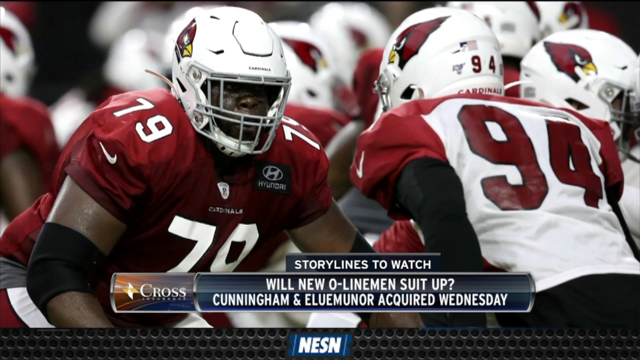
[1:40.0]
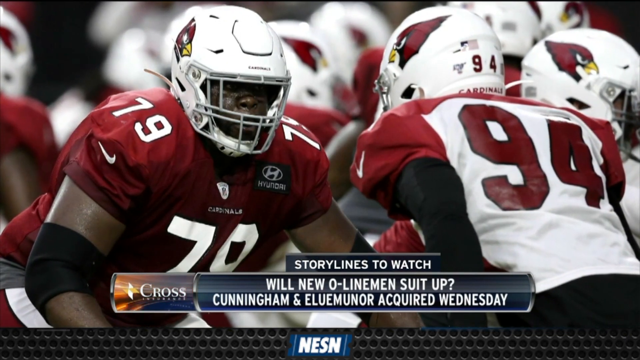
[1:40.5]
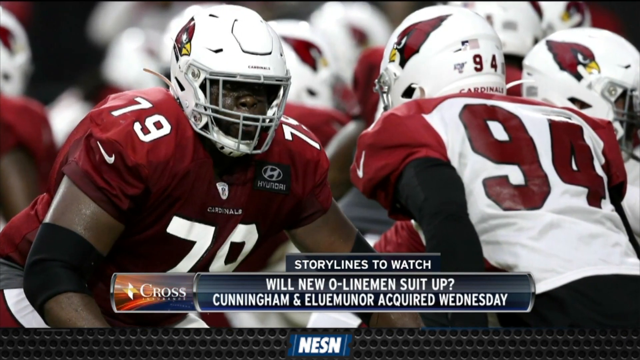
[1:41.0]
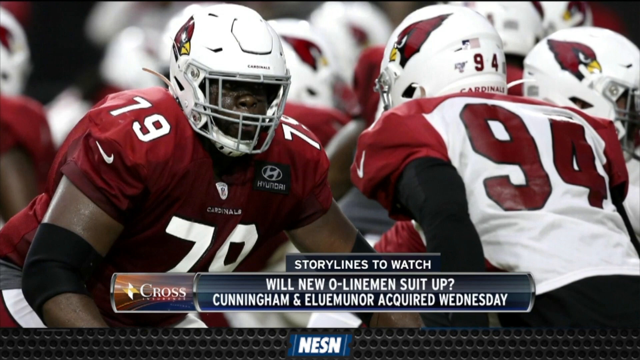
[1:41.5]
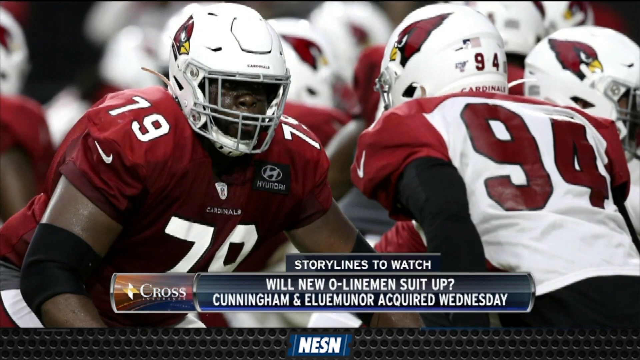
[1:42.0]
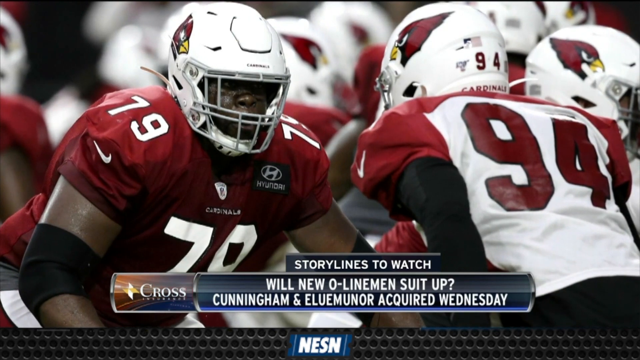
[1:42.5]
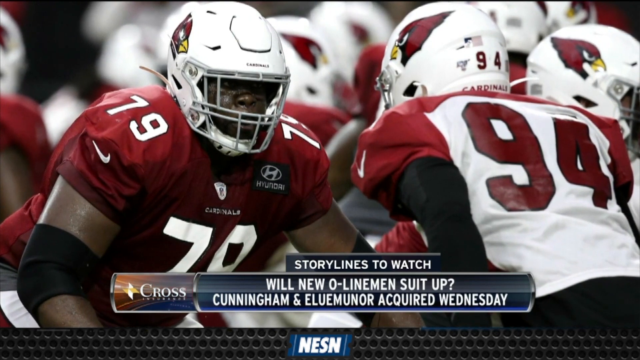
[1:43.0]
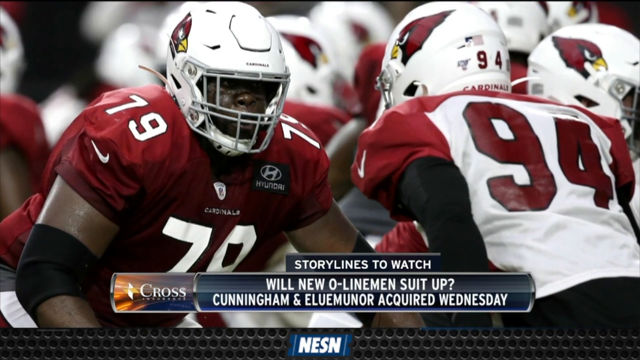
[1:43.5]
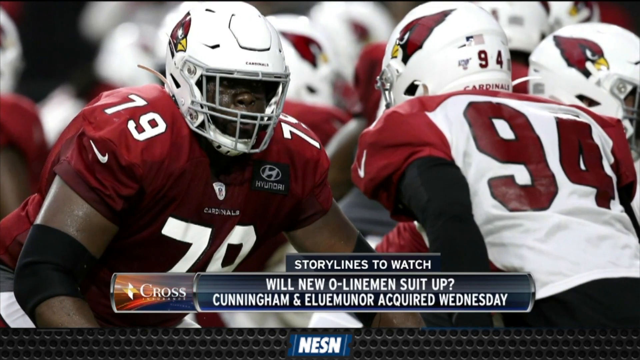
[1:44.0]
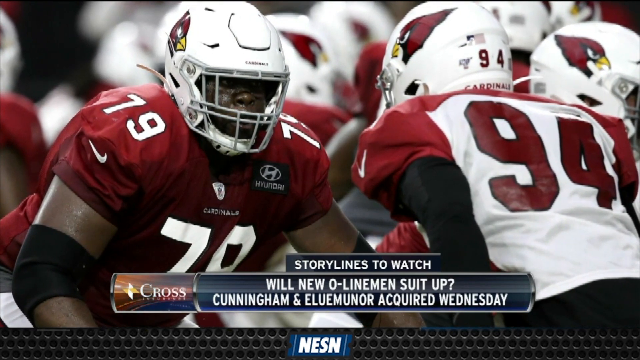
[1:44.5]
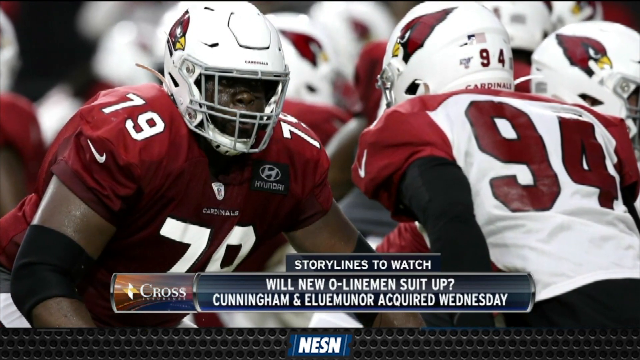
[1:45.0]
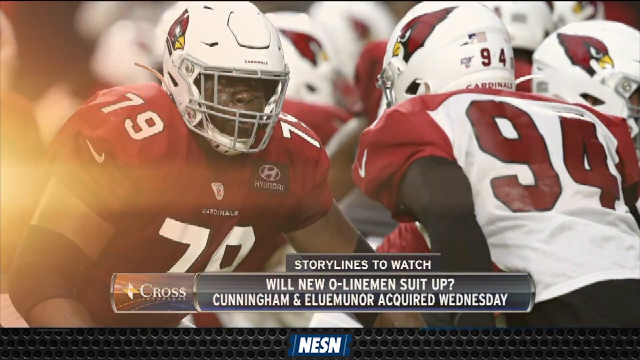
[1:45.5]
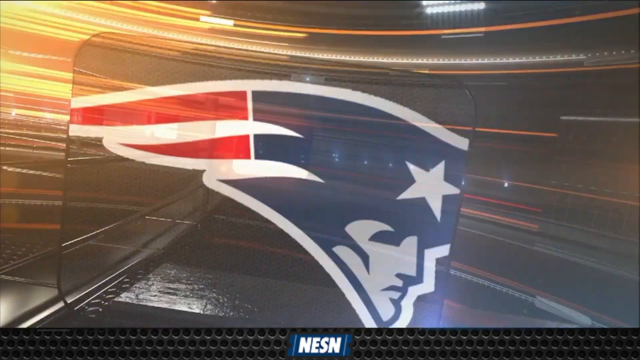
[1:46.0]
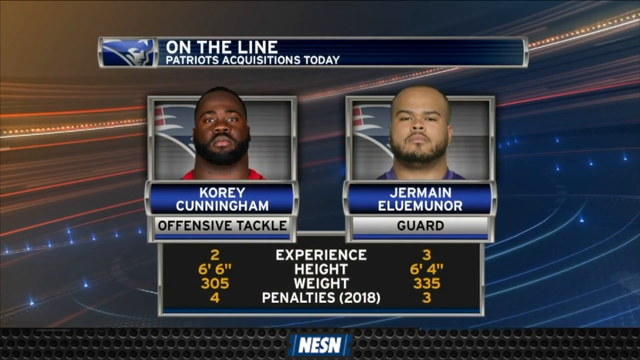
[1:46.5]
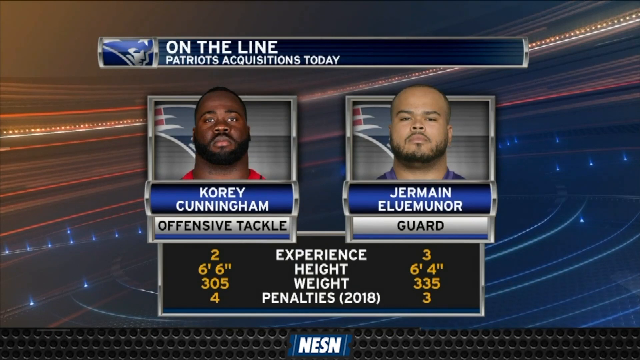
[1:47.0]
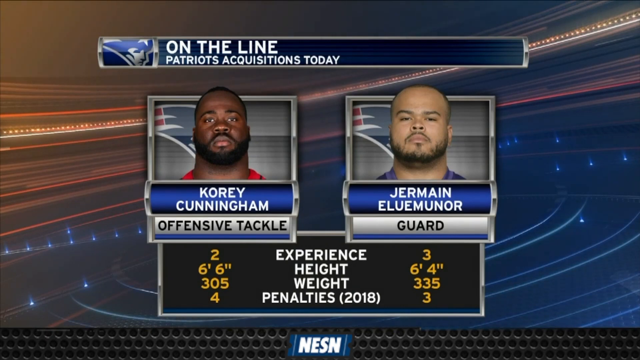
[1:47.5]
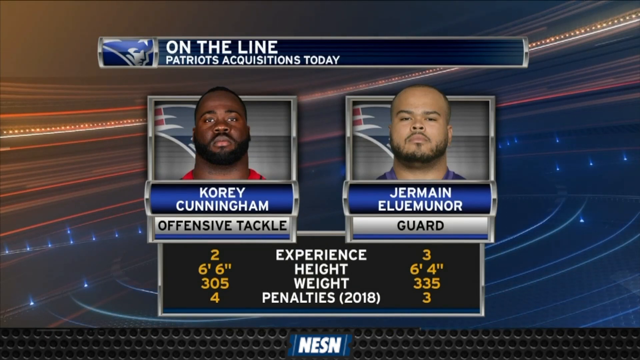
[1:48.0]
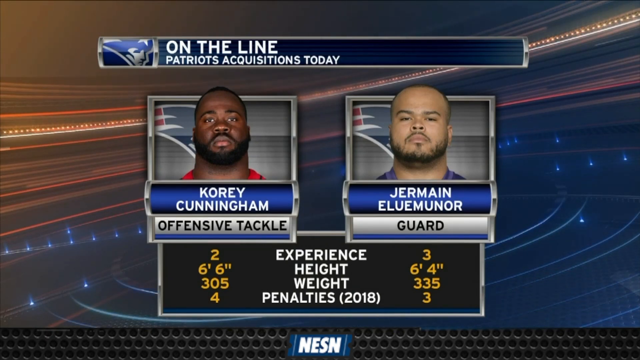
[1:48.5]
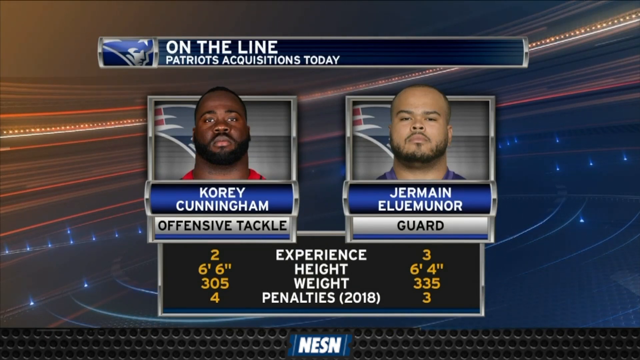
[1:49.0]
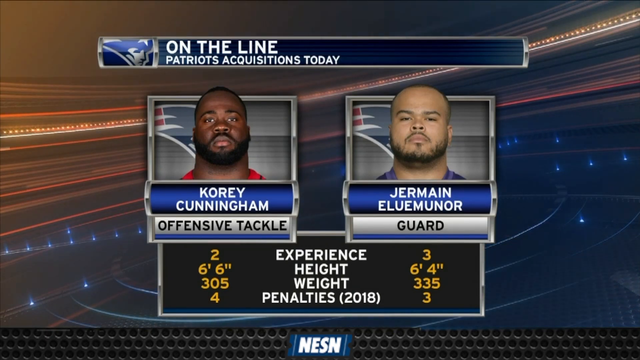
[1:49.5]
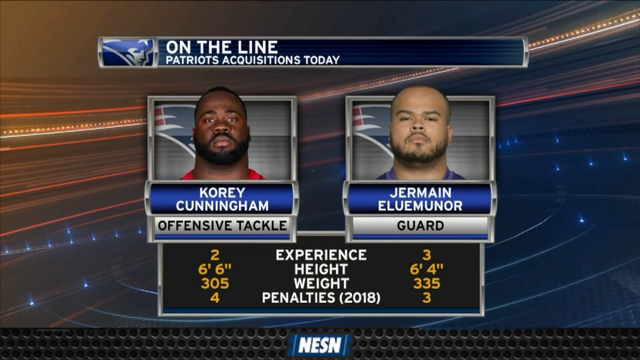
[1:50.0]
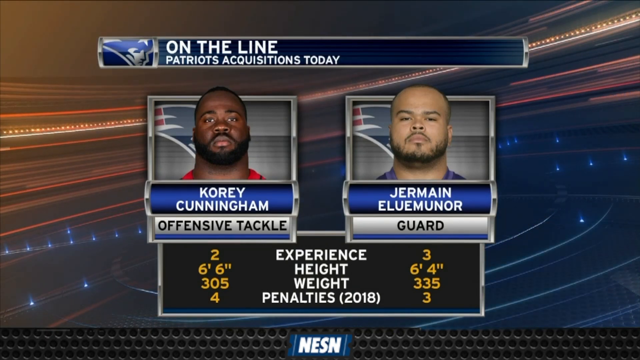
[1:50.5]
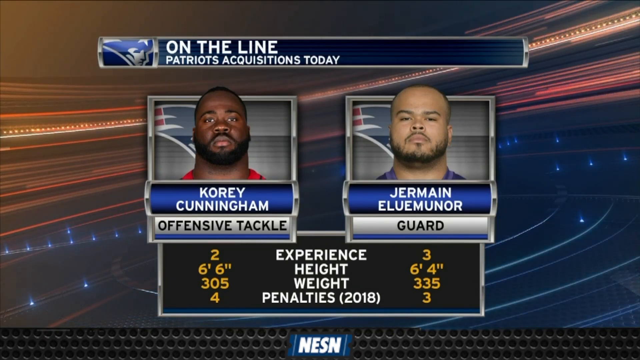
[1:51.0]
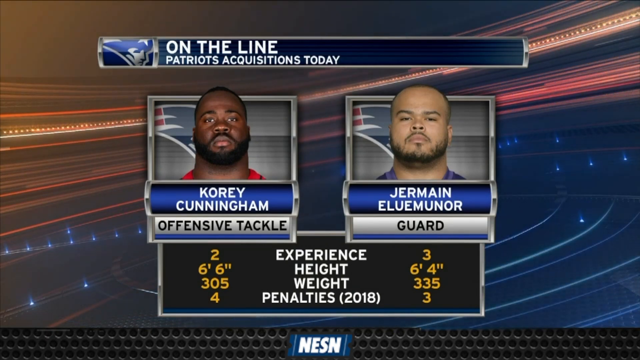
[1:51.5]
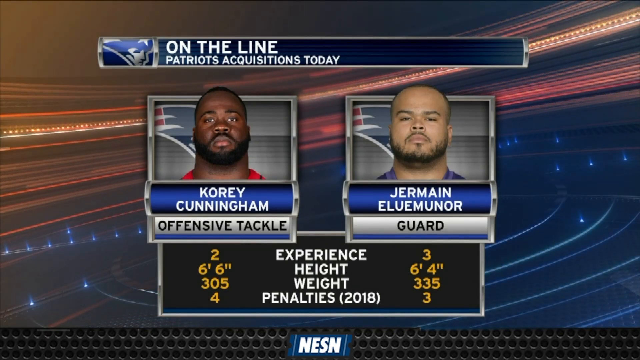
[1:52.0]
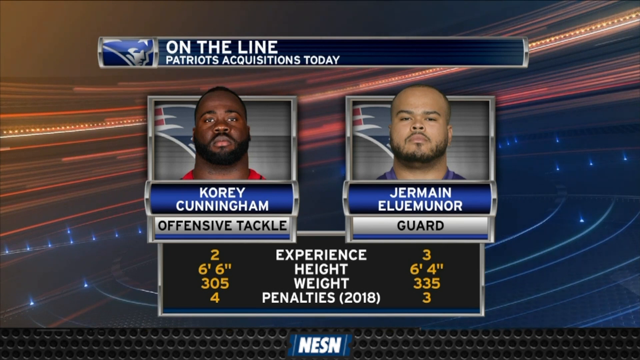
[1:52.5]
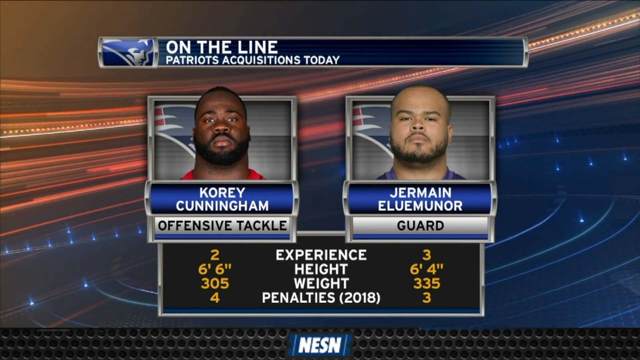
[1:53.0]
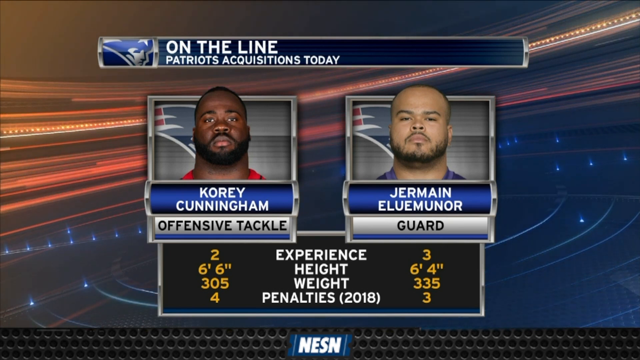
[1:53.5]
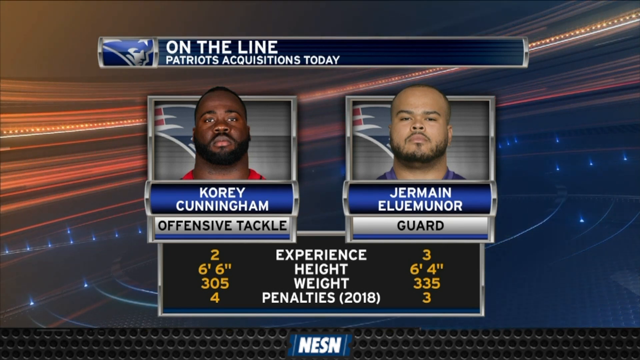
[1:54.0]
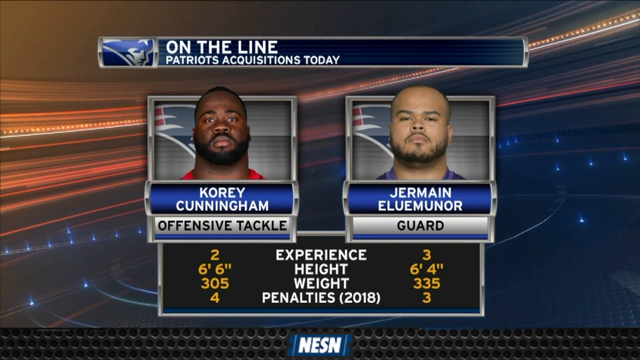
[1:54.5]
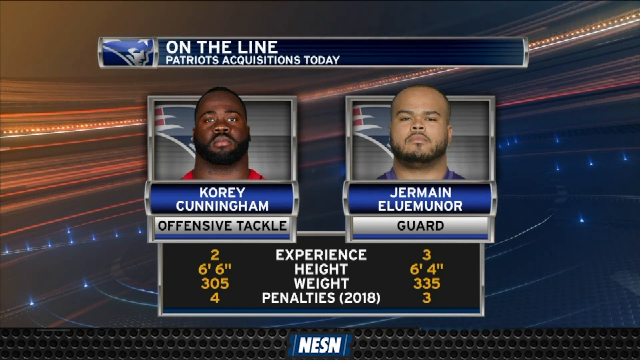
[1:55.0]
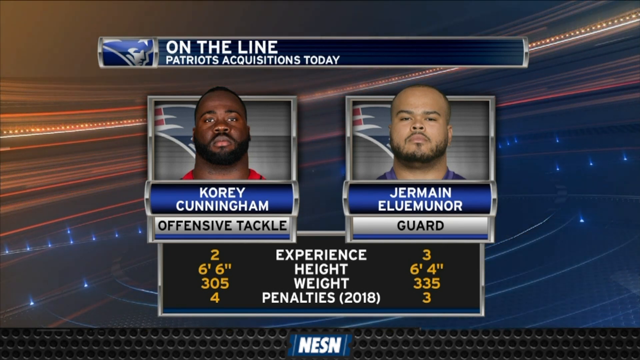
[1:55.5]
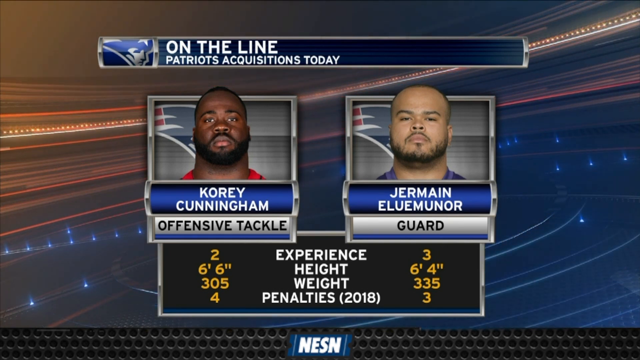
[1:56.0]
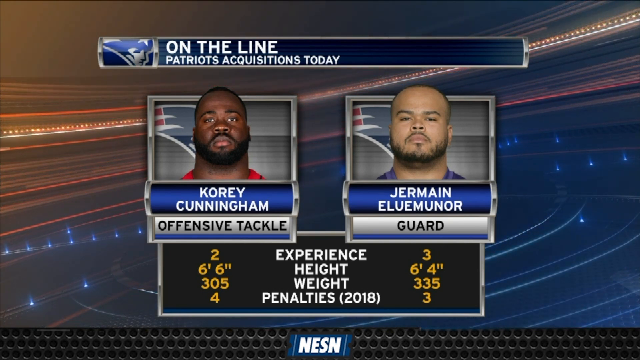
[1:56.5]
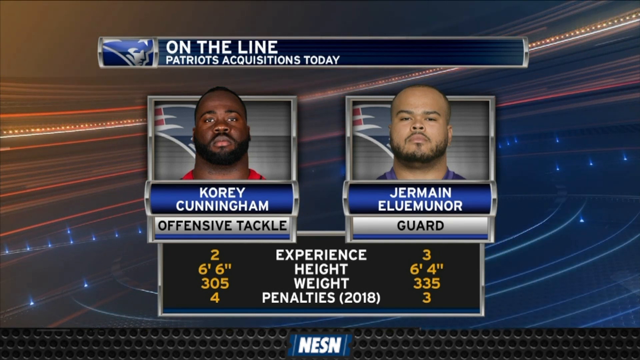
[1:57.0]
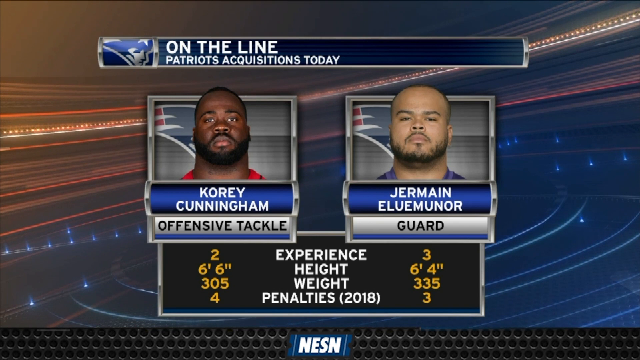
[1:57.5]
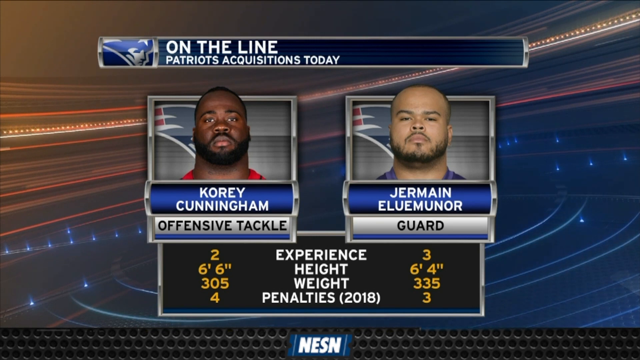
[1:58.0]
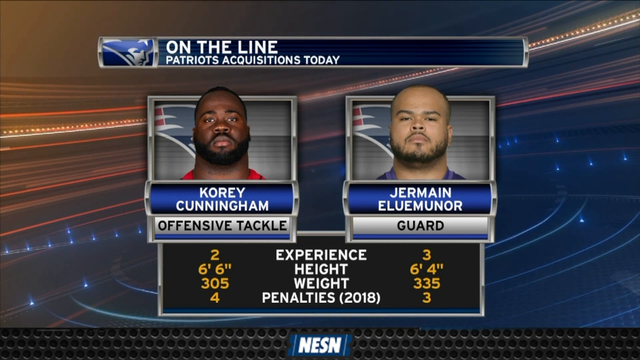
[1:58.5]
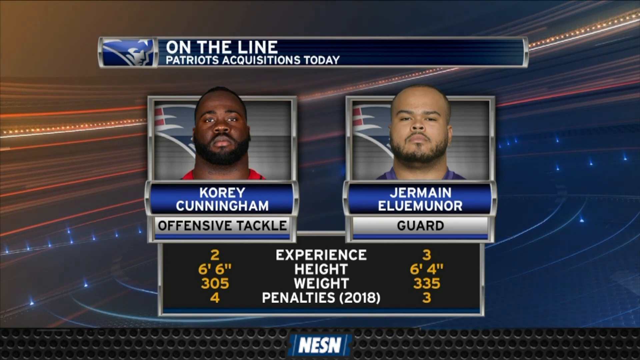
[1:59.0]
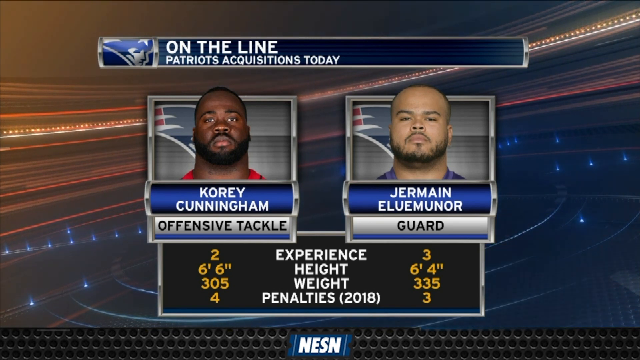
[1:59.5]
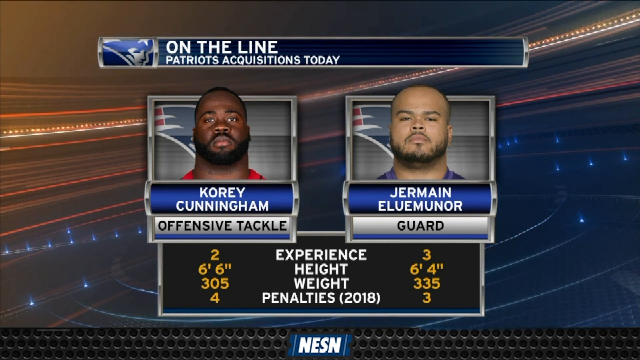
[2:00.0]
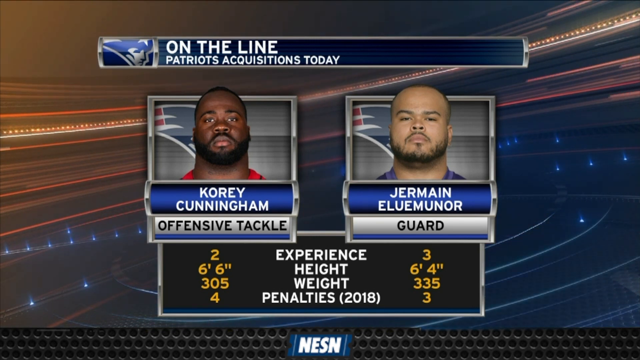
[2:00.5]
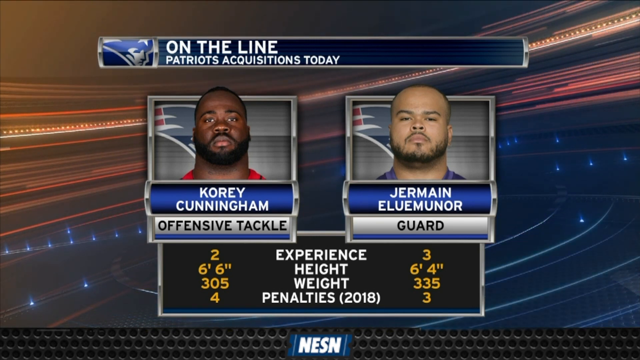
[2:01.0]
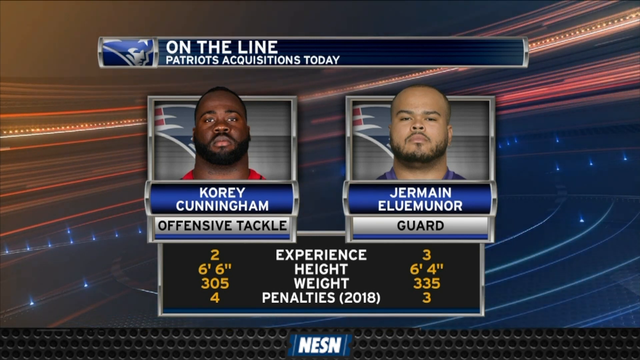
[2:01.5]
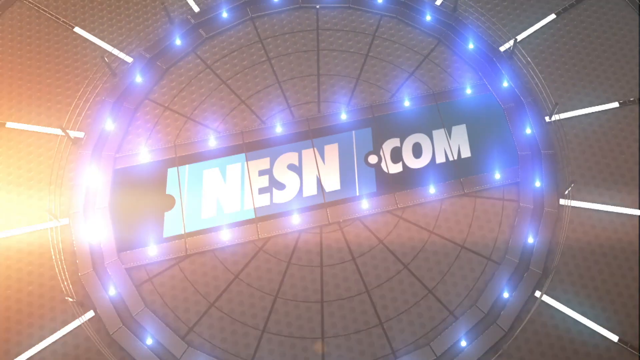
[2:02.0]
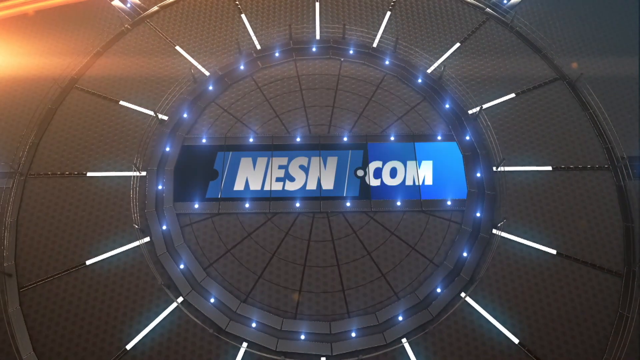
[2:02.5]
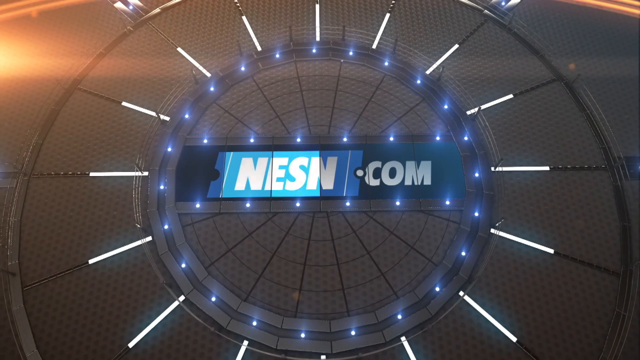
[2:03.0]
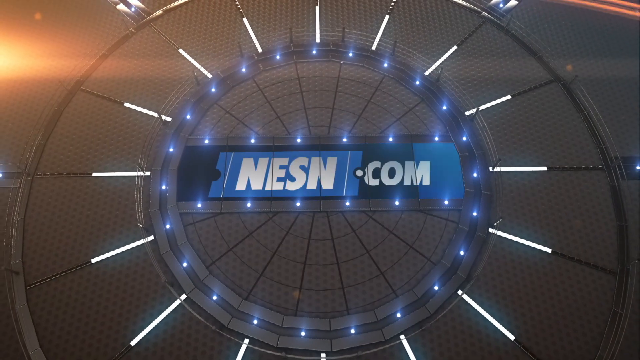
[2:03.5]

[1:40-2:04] First the two guys from the beginning appear, then a black guy on a poster, and then a bunch of guys running around the field exercising. Some wear red jerseys, some white jerseys, and others navy blue jerseys; they look like they are enjoying their training. The video then changes to another poster, followed by a black guy walking around, stretching his legs and exercising. A lot of guys are on the field exercising and running around, seemingly just exercising for the time being. Then there is a poster with the guys, some in white jerseys and others in red jerseys. There are about 20 of them, more or less. Then two of them appear on what seems to be a list of the team players. The video changes to the news and then comes back to the field.